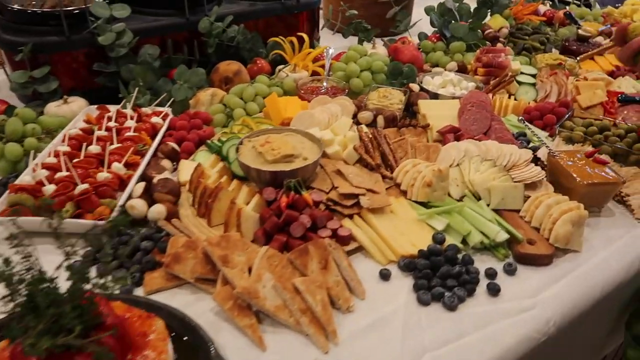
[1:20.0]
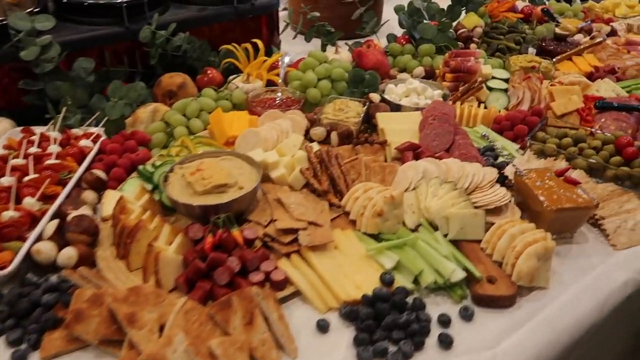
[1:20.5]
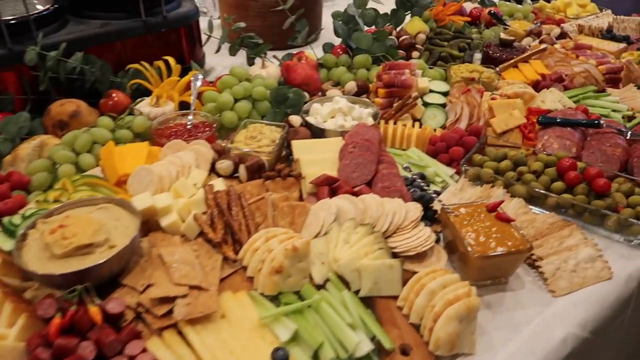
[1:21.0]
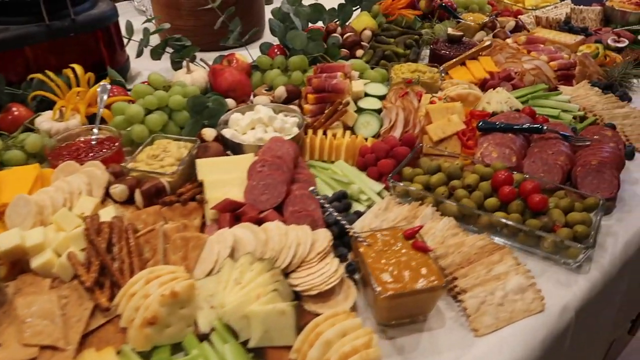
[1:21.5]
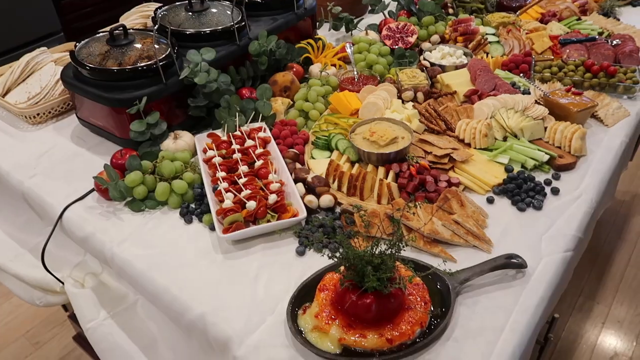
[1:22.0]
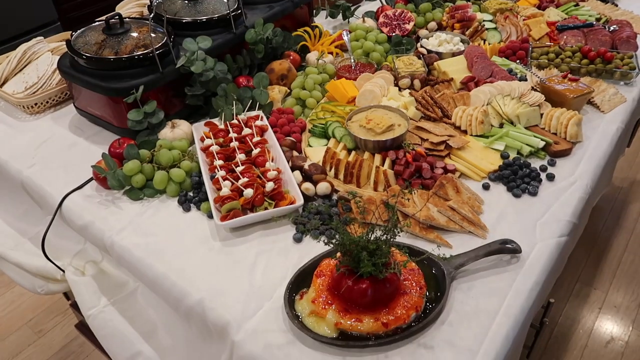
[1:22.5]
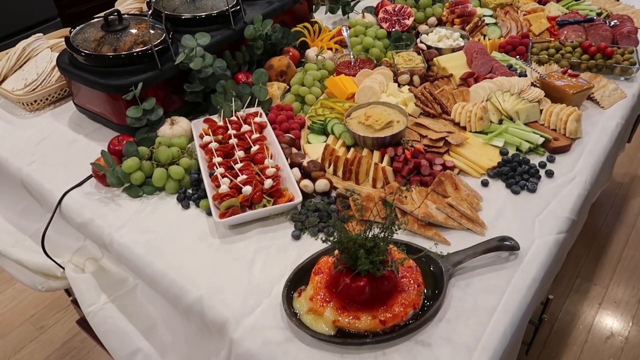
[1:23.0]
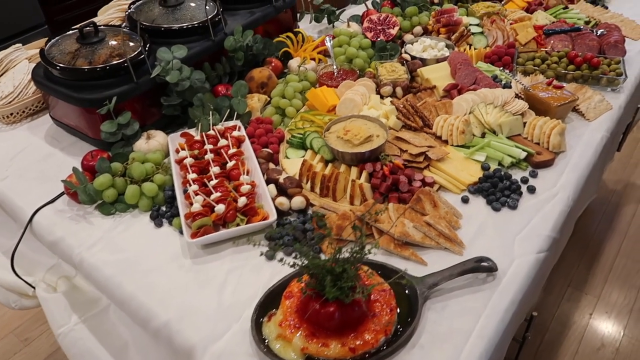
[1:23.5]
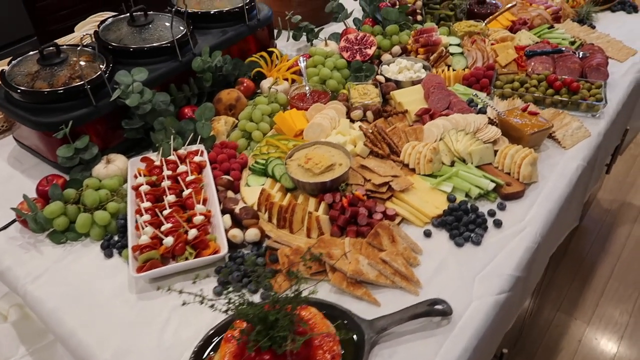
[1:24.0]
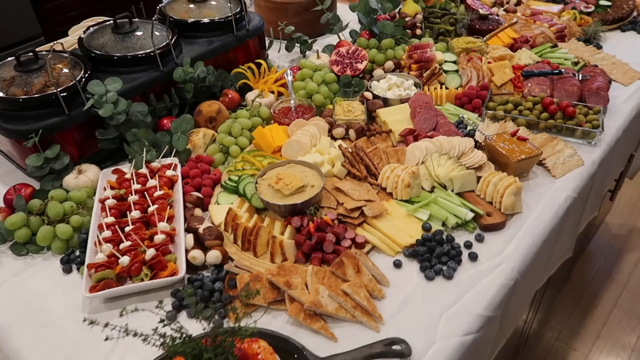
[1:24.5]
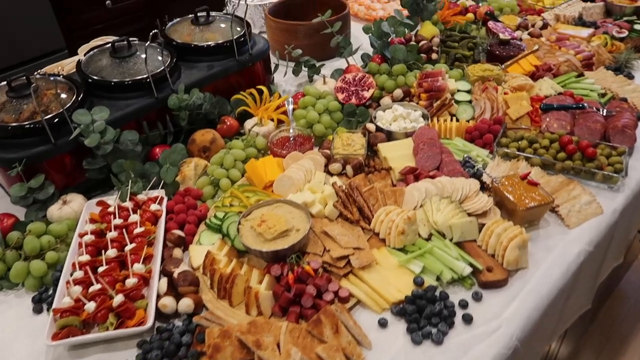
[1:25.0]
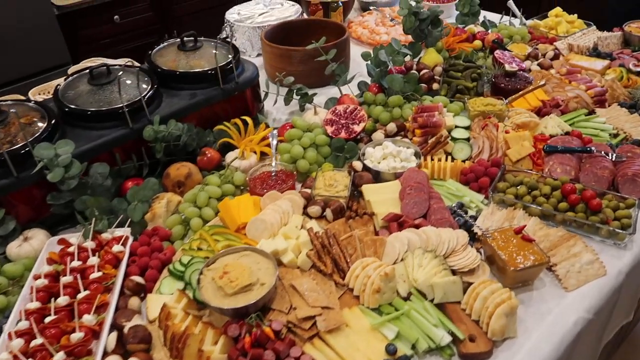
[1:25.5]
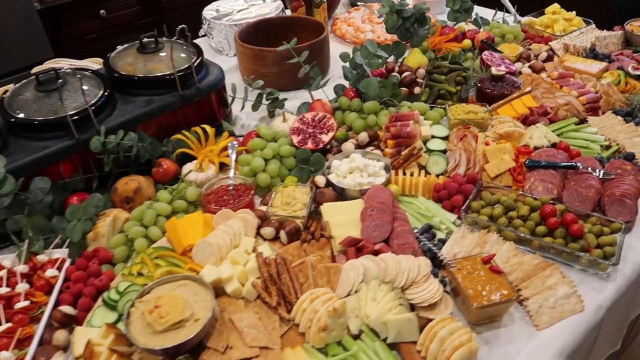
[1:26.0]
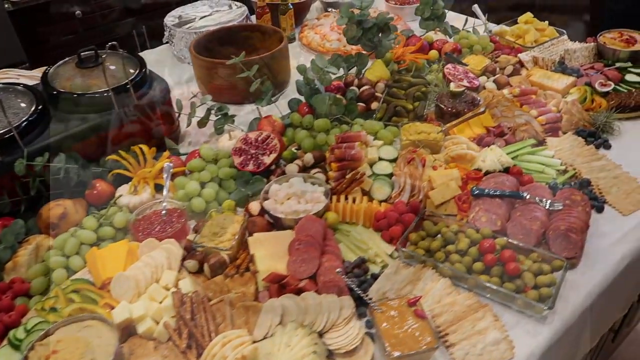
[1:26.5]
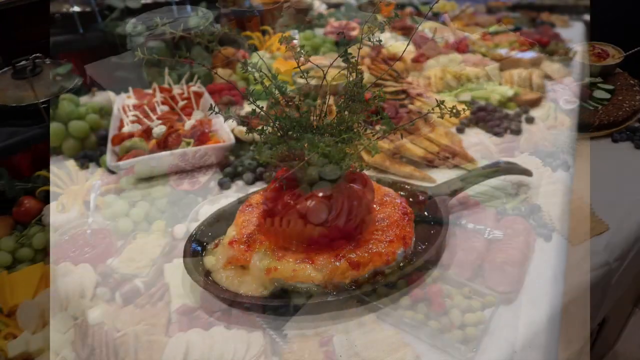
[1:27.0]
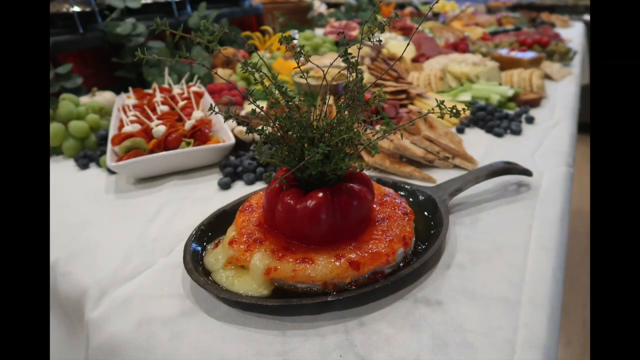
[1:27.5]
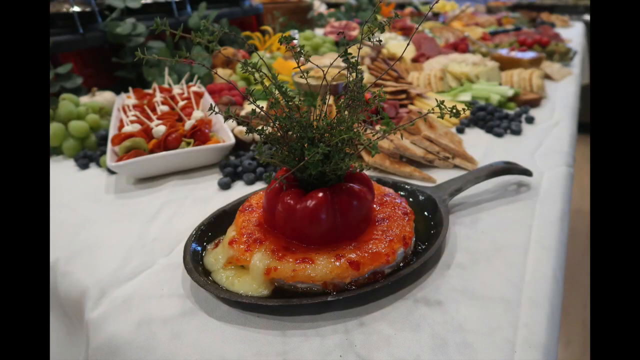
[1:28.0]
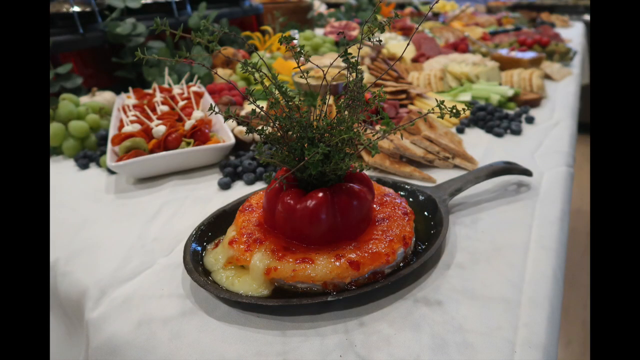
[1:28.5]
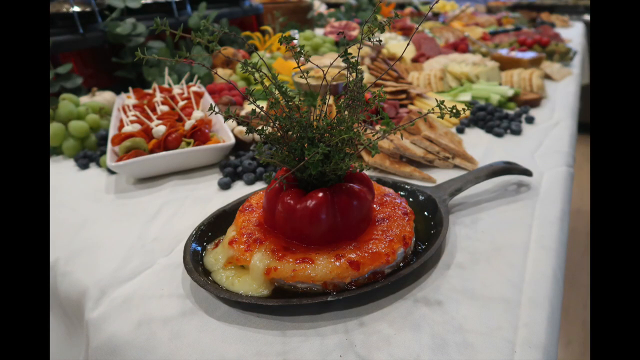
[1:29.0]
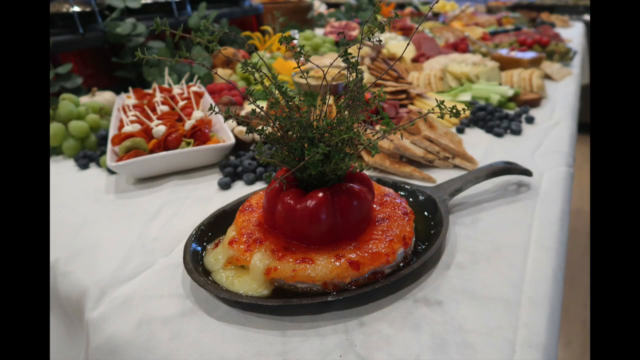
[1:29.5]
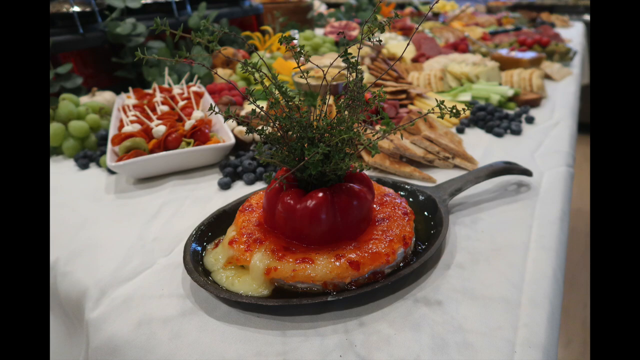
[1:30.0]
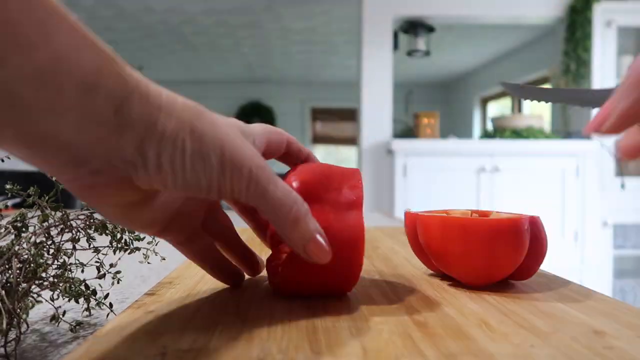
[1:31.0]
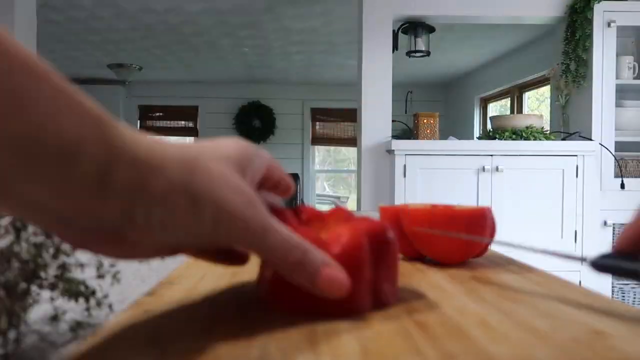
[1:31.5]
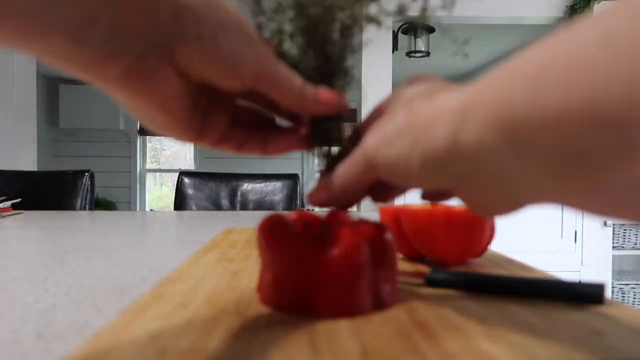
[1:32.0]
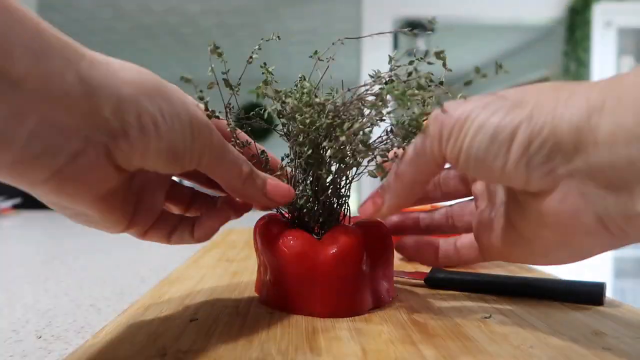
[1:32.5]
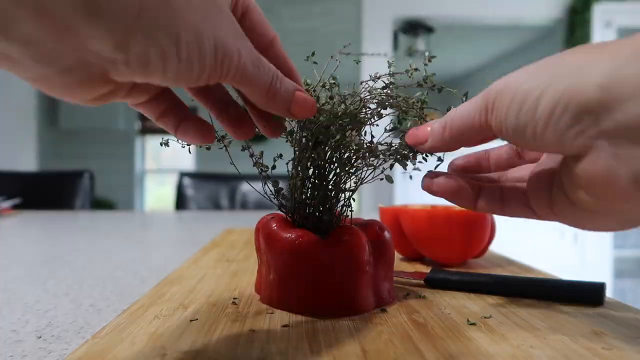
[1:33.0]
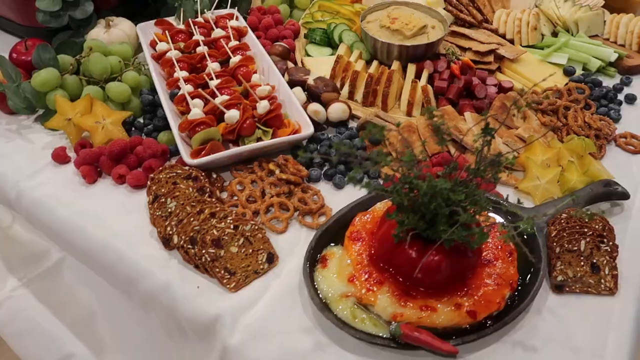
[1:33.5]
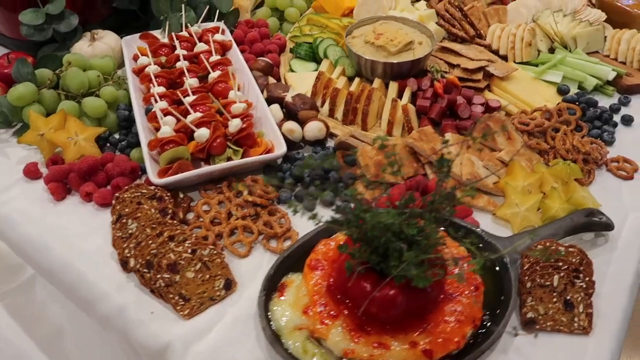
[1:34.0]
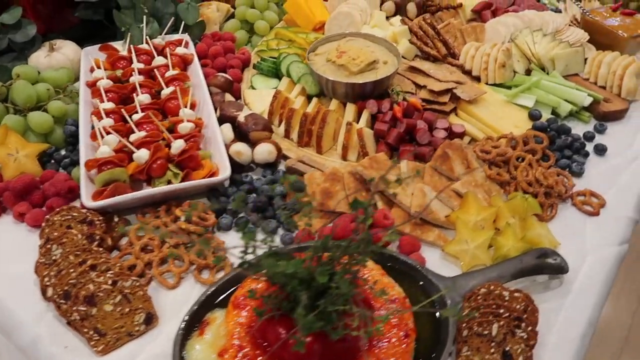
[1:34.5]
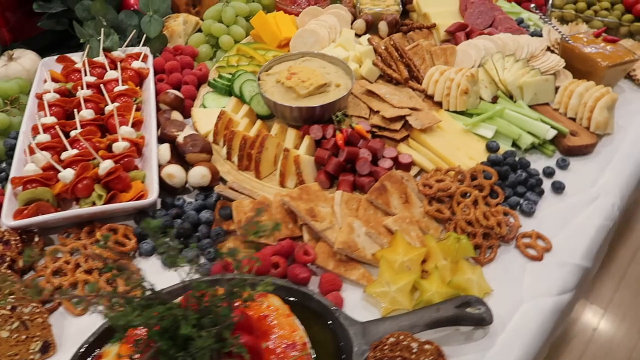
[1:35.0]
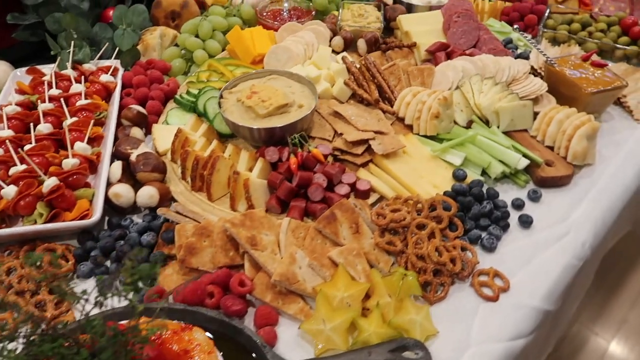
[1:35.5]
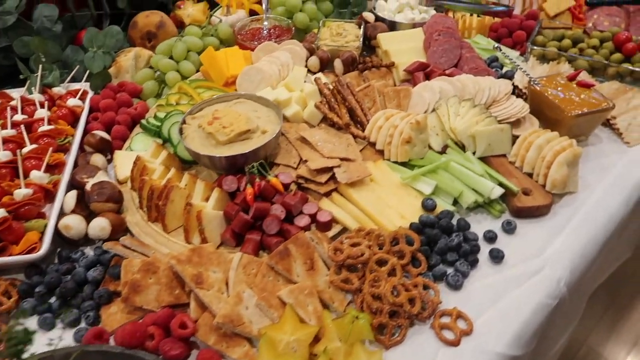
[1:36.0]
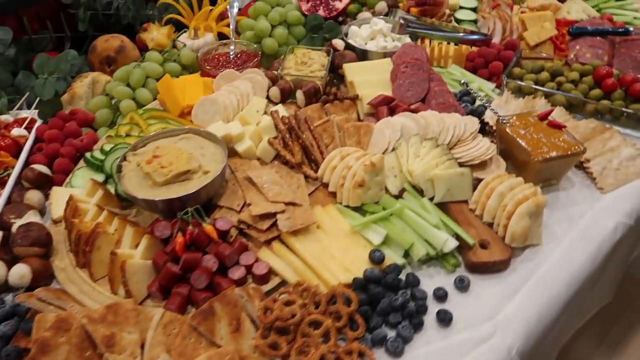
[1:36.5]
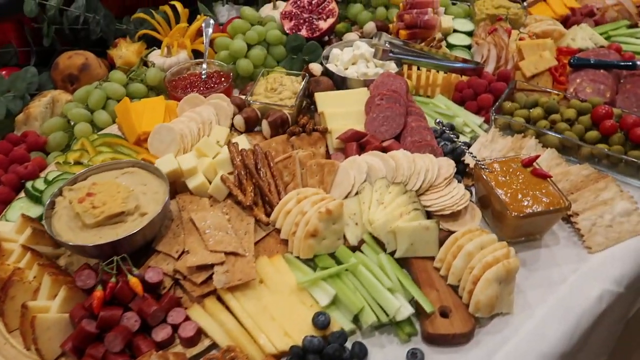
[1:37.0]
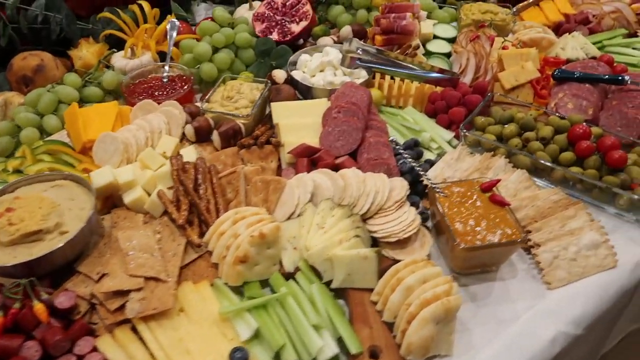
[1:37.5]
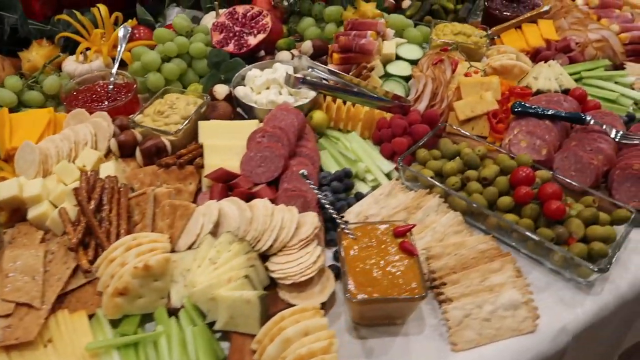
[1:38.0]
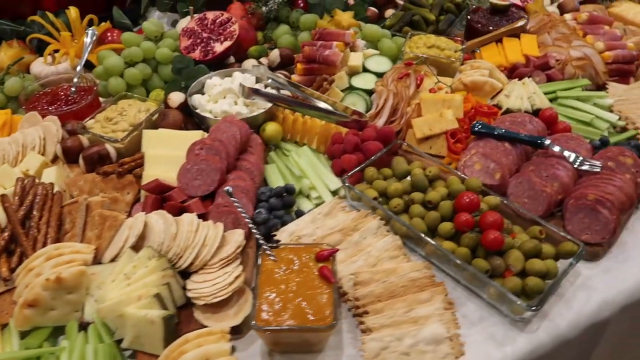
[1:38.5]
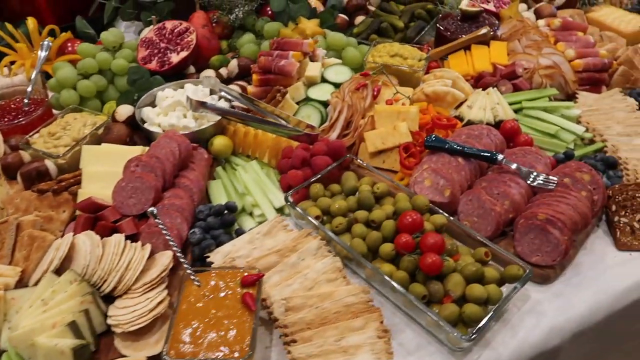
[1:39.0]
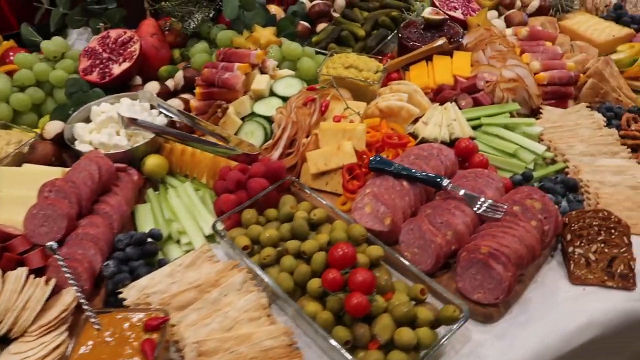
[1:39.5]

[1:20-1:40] The camera pans around a table with a white covering, filled with various kinds of food and fruits: sausages, crackers and dills. The camera pans from left to right, showing sliced cucumbers, some white cheese in a stainless steel pot, and a fry pan with a dish inside and a leaf on top. There are black casserole pots with transparent lids and black handles, and at the back are brown baskets filled with white wraps. The floor is light brown. What looks like a wire is on the table and extends to the ground. More food on the table includes blackberries and celery sticks. The casserole pot is placed on a black and white oven. The video then transitions to show how the meal in the frying pan is made: a bell pepper is sliced and the green plant is placed on top. The camera continues panning around the table, showing a knife placed on top of slices of ham.